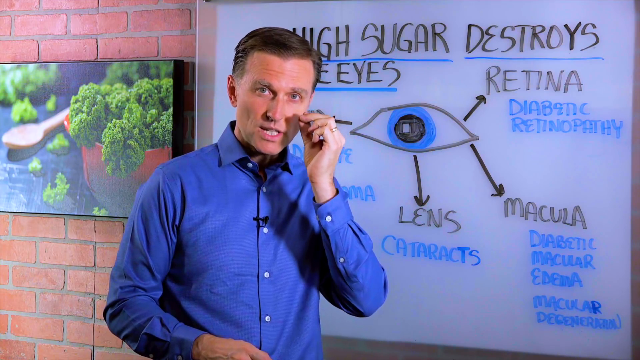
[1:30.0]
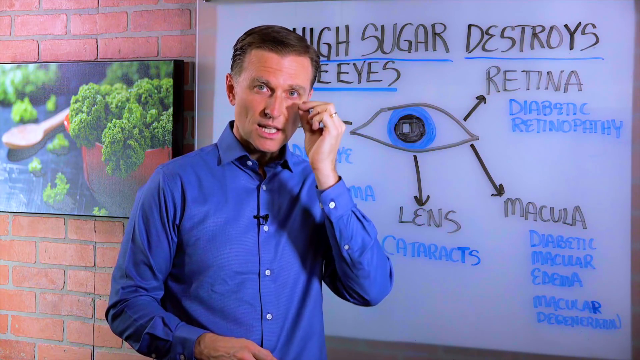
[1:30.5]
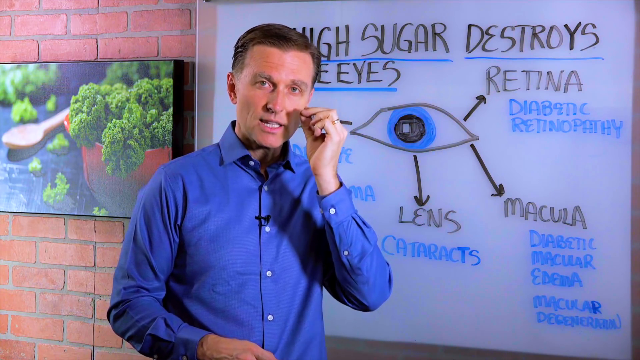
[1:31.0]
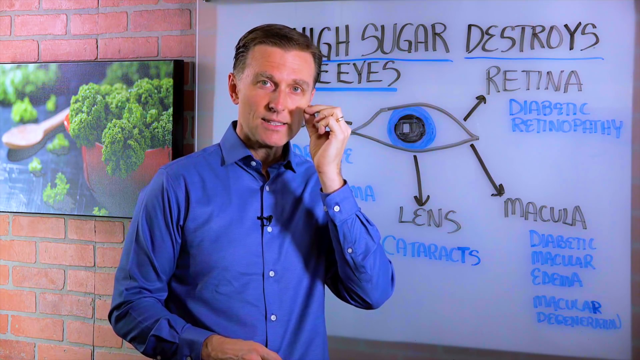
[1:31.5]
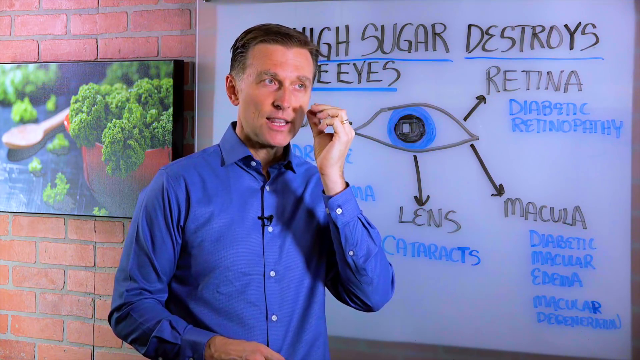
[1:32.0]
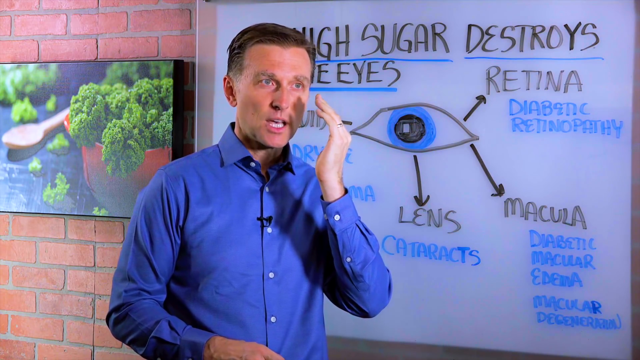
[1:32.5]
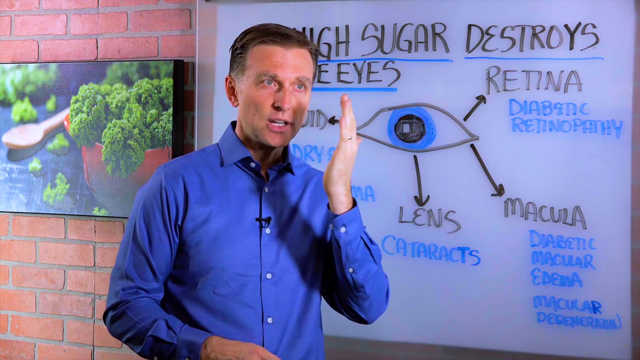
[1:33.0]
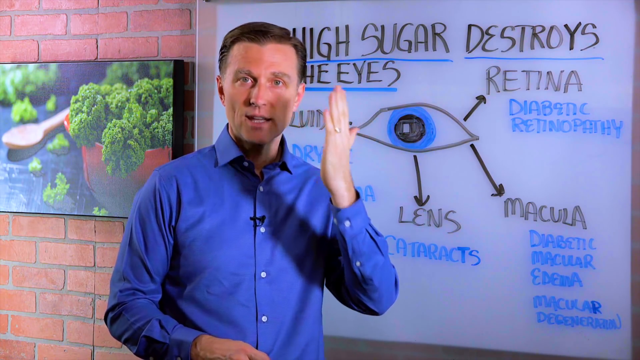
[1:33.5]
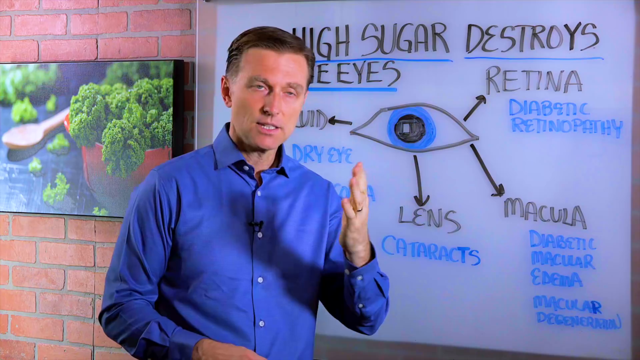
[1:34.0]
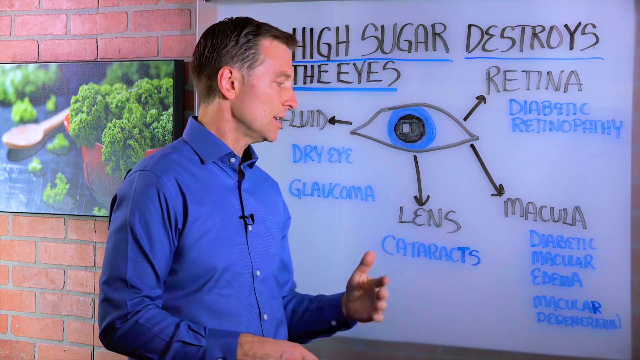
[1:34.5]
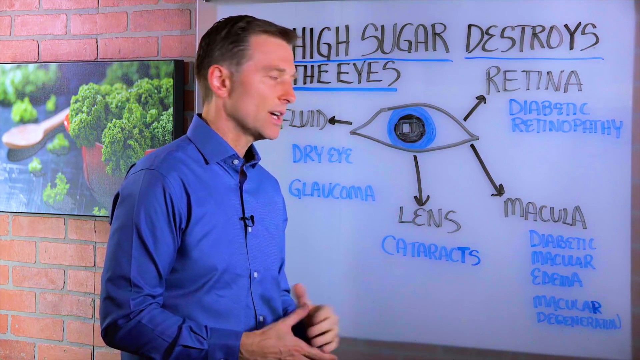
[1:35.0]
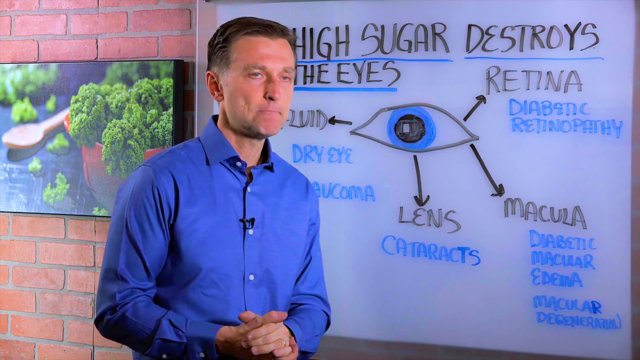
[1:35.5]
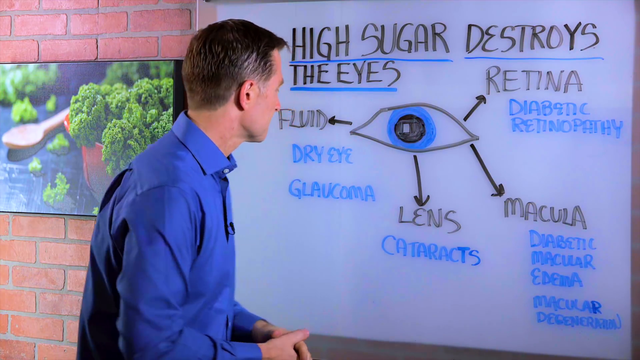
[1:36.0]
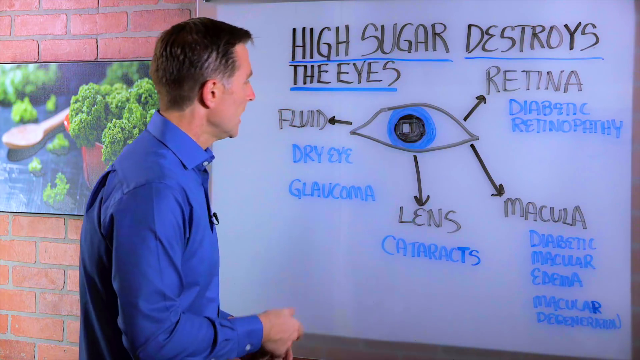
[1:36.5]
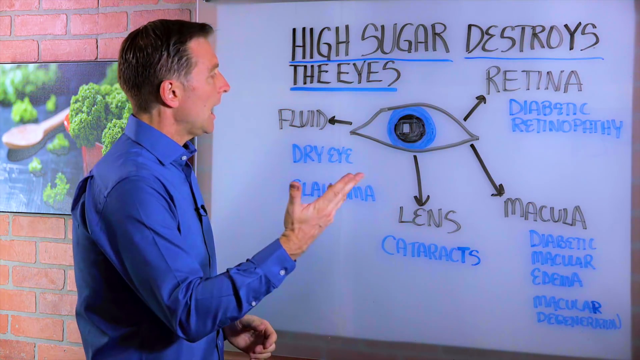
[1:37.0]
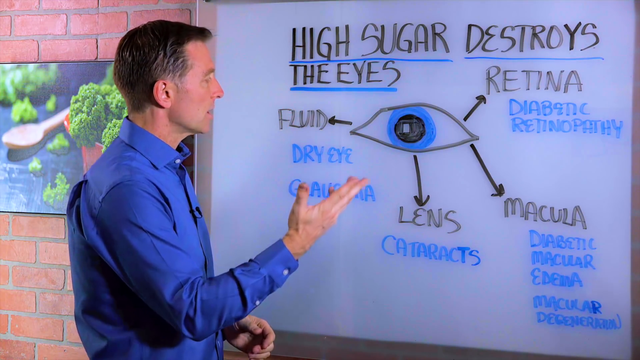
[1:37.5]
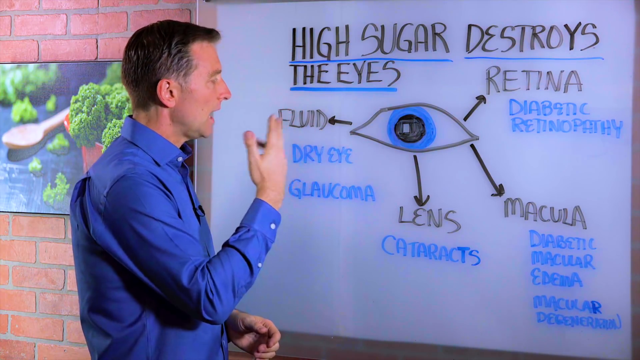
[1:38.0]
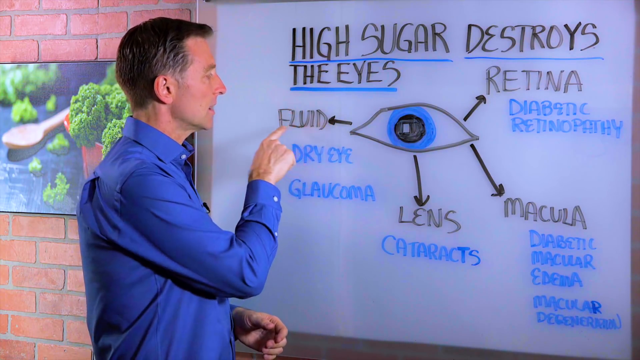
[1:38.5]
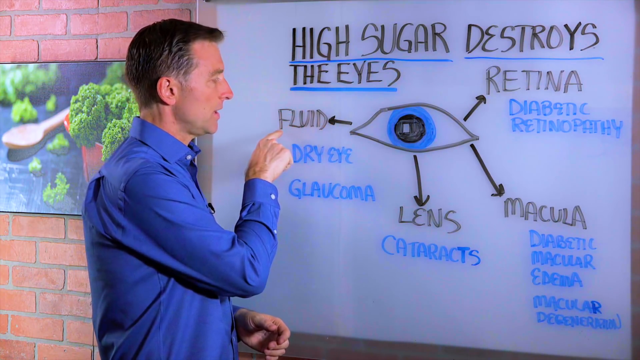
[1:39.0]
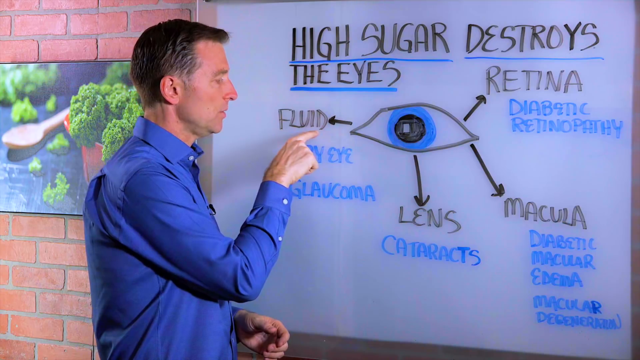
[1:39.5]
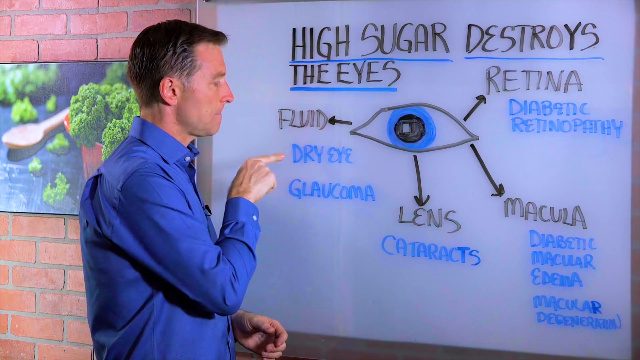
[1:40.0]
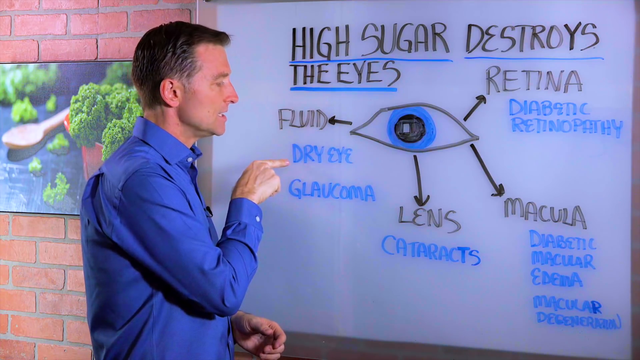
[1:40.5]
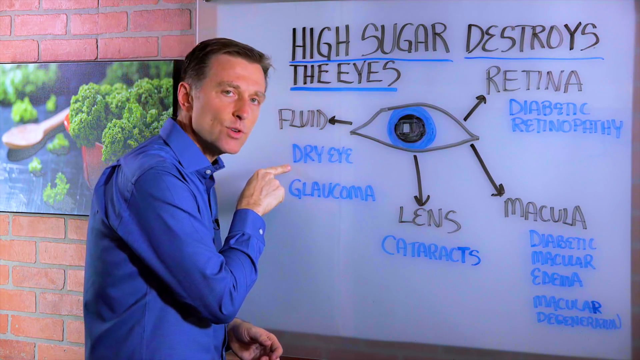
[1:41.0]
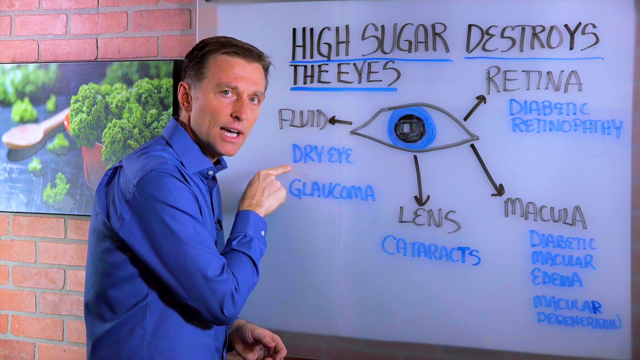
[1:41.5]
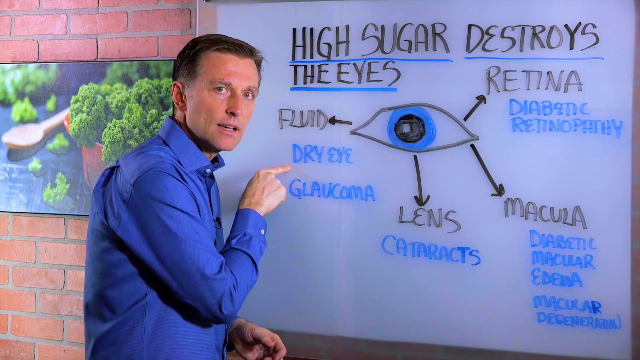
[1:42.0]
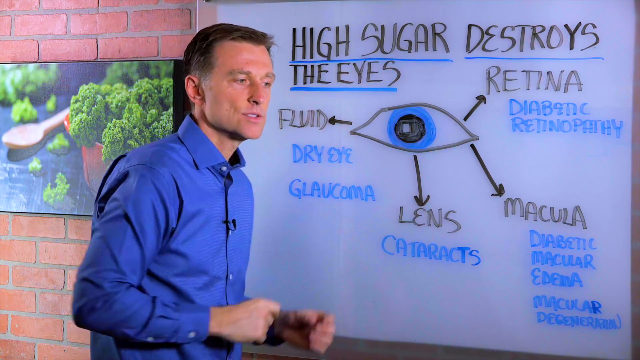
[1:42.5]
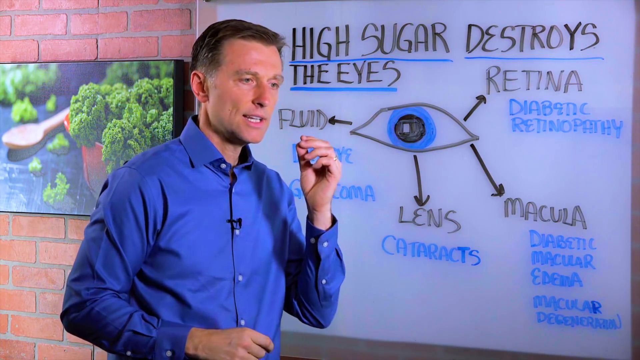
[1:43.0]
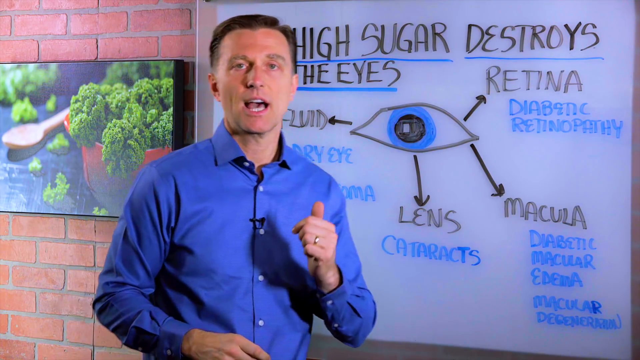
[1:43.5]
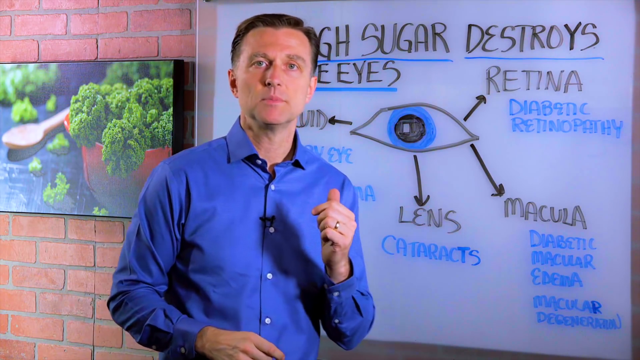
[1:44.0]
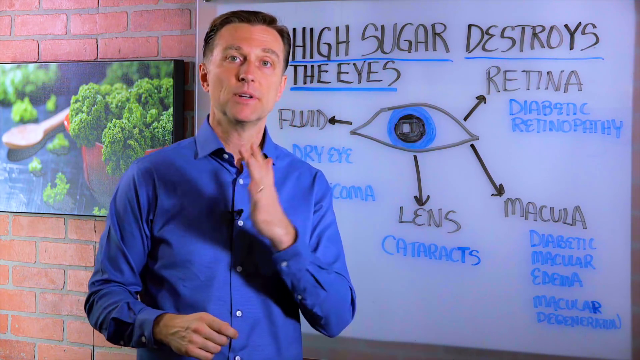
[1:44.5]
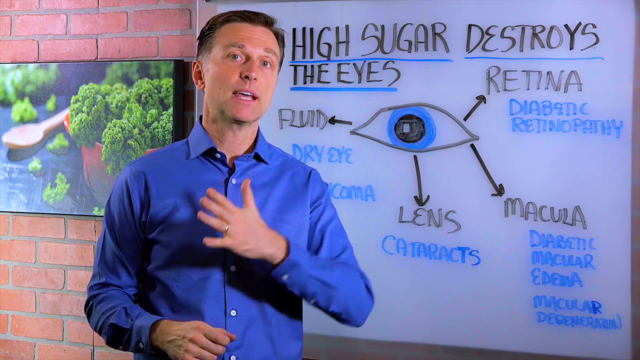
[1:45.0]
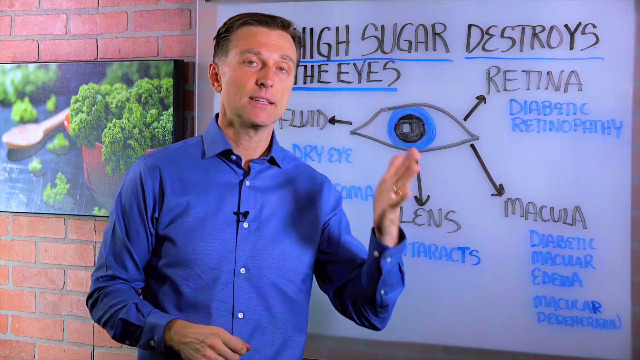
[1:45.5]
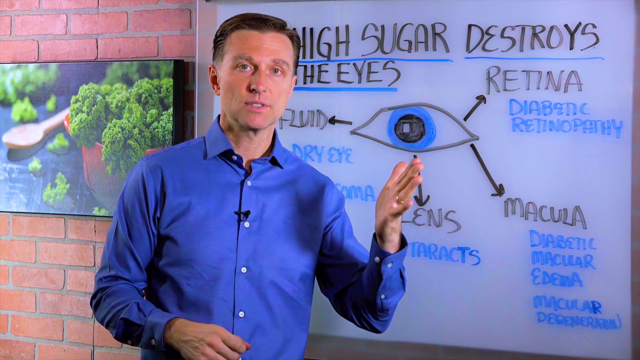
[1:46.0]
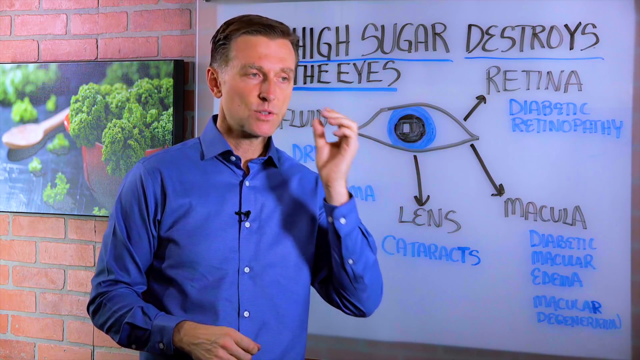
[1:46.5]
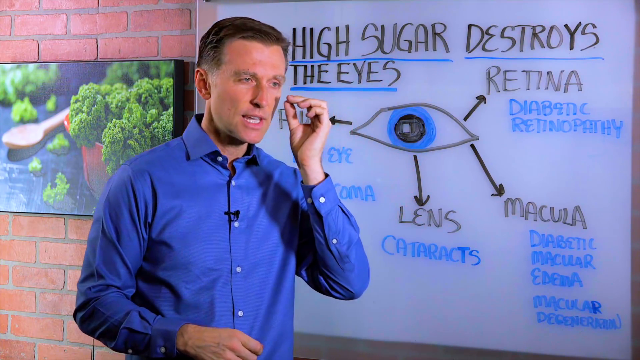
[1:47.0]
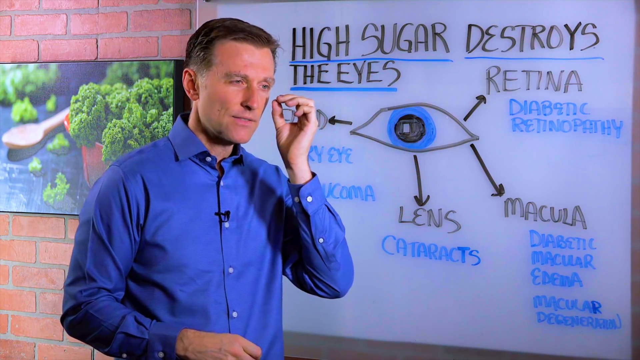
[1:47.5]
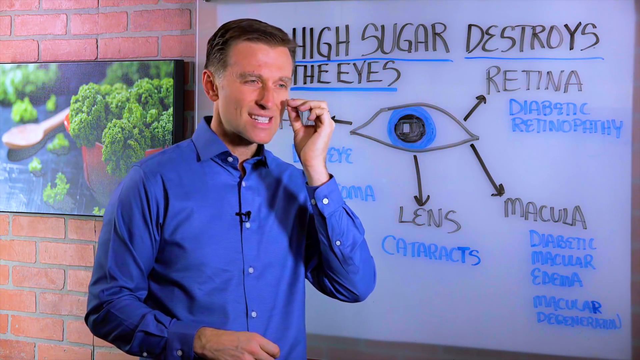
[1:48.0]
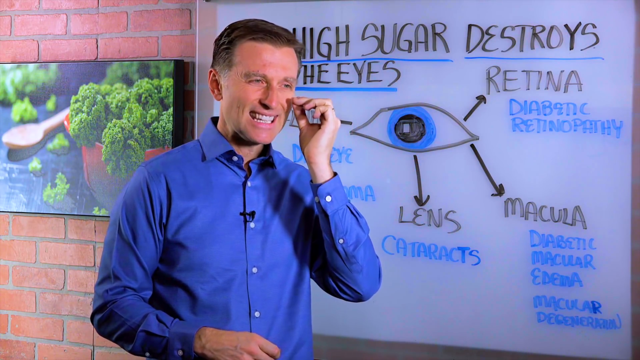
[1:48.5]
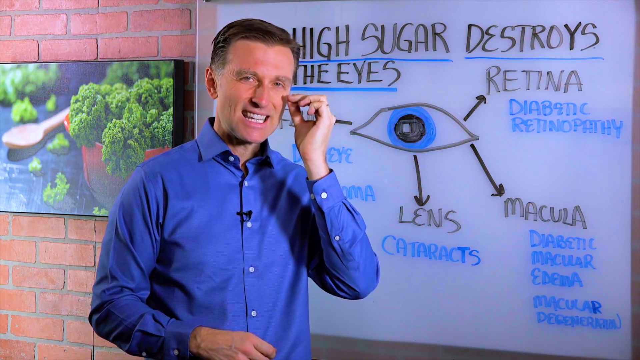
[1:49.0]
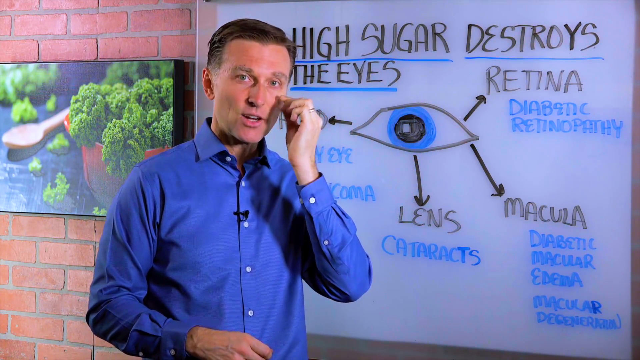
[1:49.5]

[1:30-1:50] Dr. Berg, a Caucasian man, perhaps in his late 40s, fit, well-built and handsome, faces the camera in front of a large whiteboard on the right side of the screen bearing the words "high sugar destroys the eyes." Seen from the waist up, he has his left hand on or near his left eye. Then he brings both hands together, palms facing one another but held apart, moving them in unison up and down while looking at the camera. His right hand grabs a marker, and he points to the words "retina" and "diabetic retinopathy." An image of an eye is shown. Back at the board, only his hand, not his face, is visible pointing to the word "retina" again. He then goes to the words "fluid" and "dry eye" on the left side of the eye drawing. With his right pointer finger he turns to his left and points to "dry eye," which is written under "fluid"; below "dry eye" is the word "glaucoma."